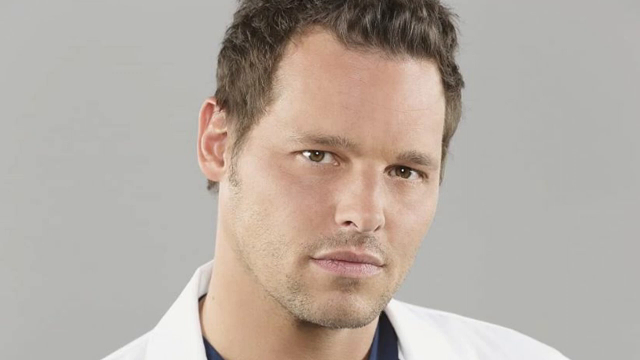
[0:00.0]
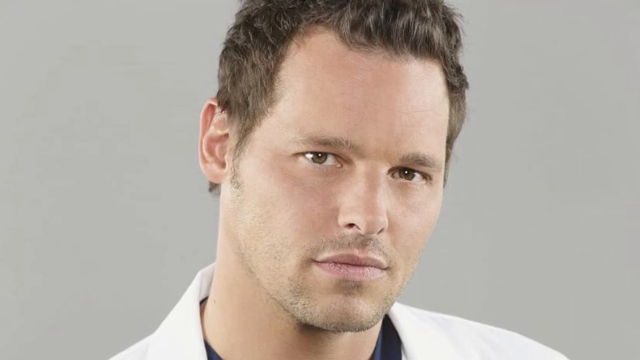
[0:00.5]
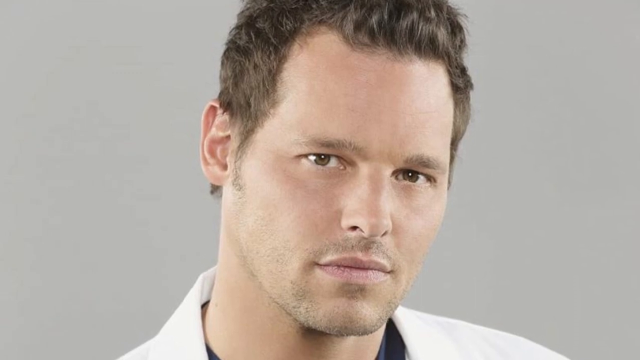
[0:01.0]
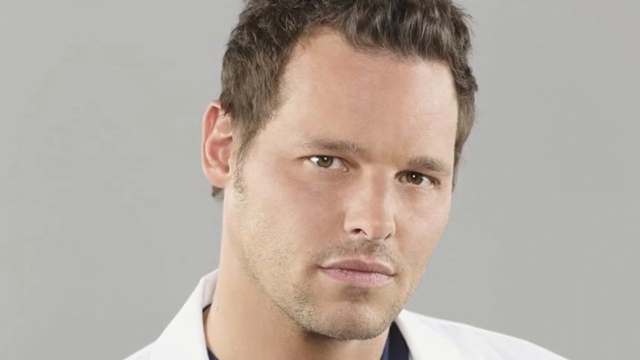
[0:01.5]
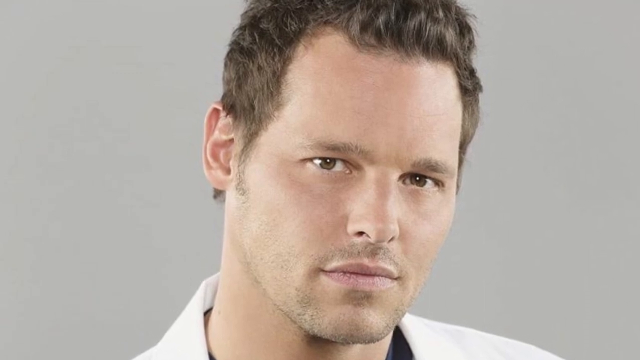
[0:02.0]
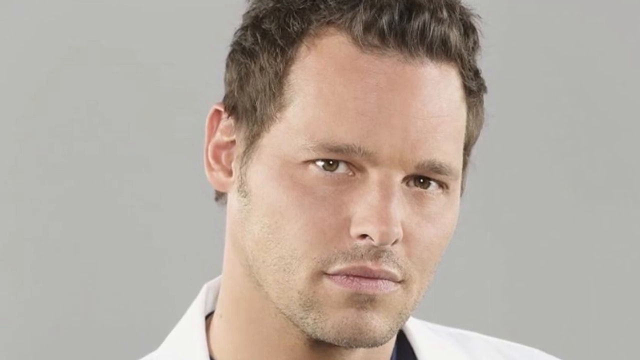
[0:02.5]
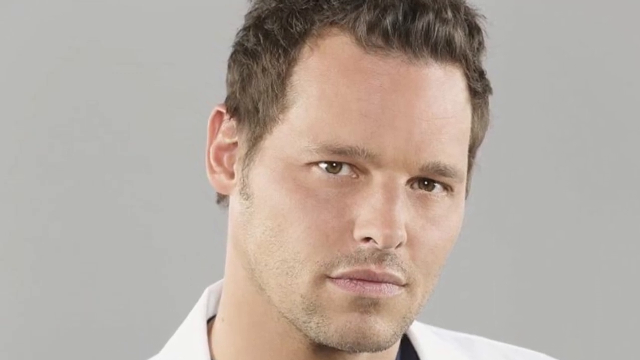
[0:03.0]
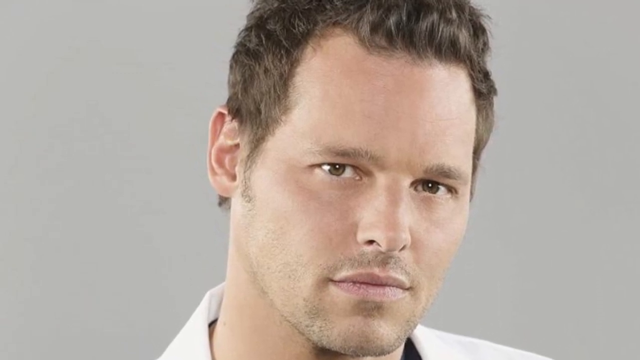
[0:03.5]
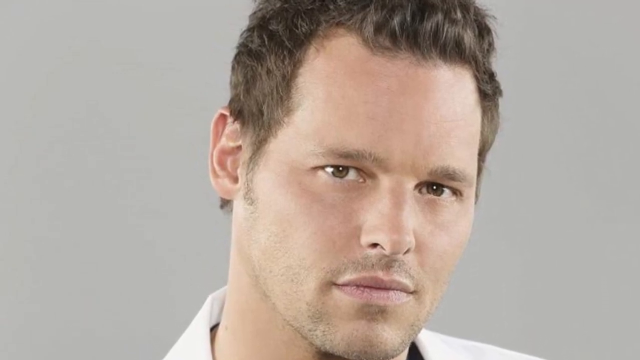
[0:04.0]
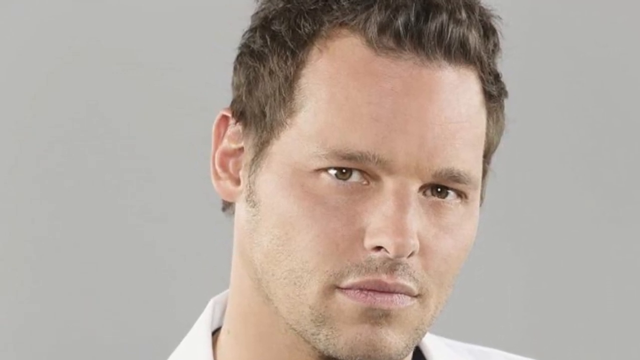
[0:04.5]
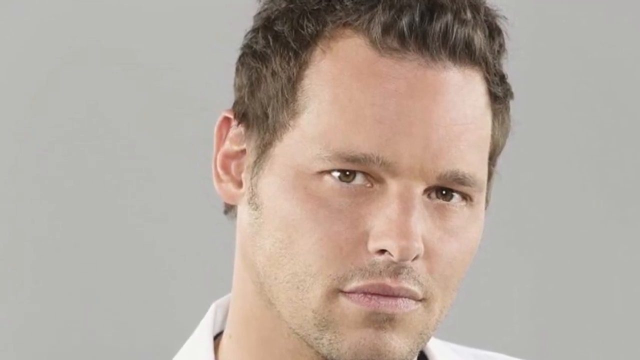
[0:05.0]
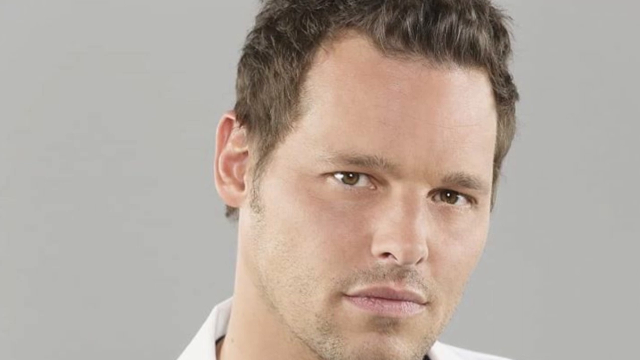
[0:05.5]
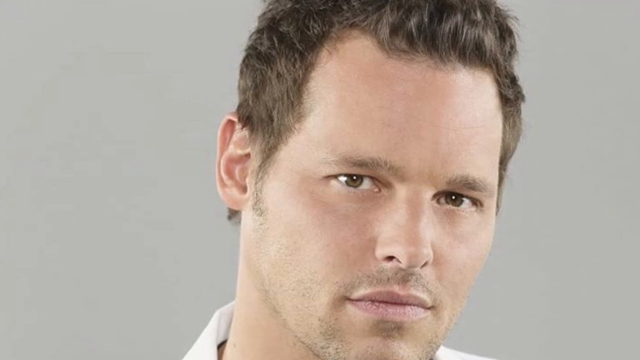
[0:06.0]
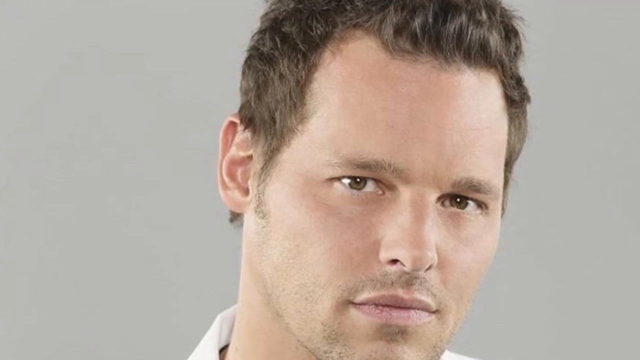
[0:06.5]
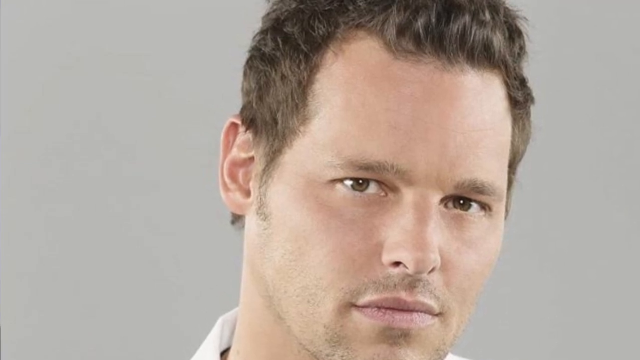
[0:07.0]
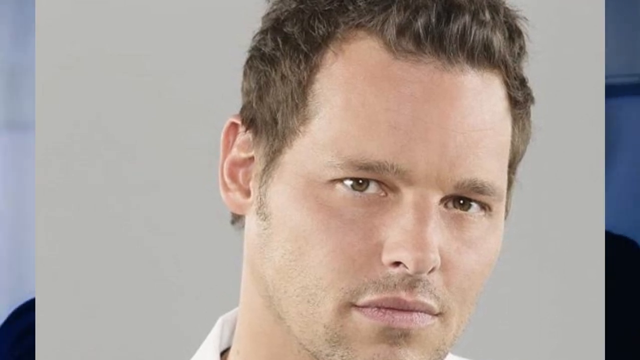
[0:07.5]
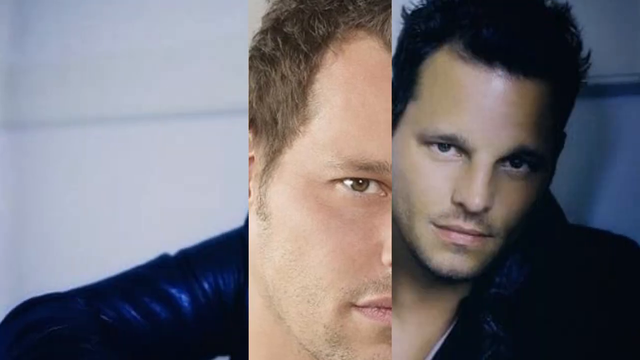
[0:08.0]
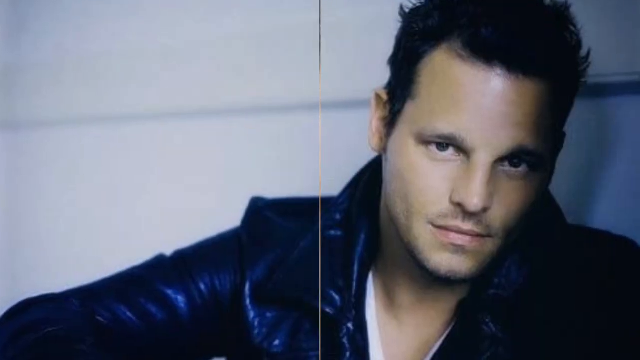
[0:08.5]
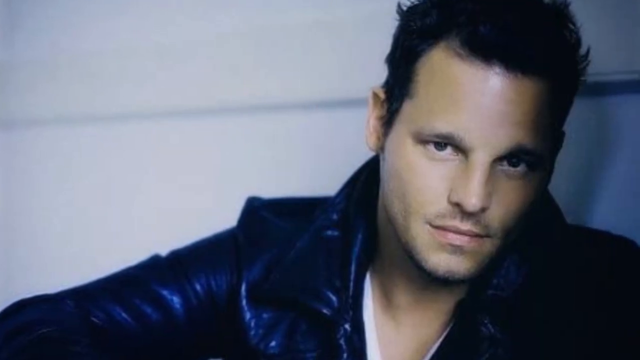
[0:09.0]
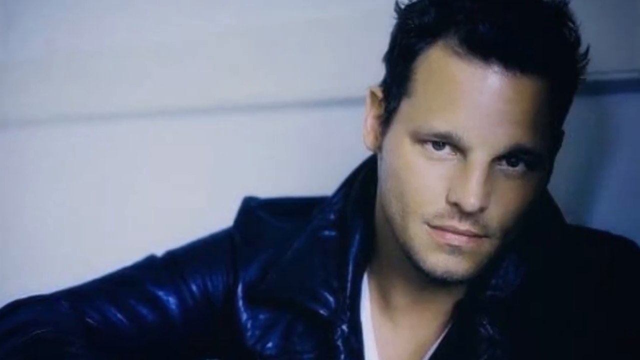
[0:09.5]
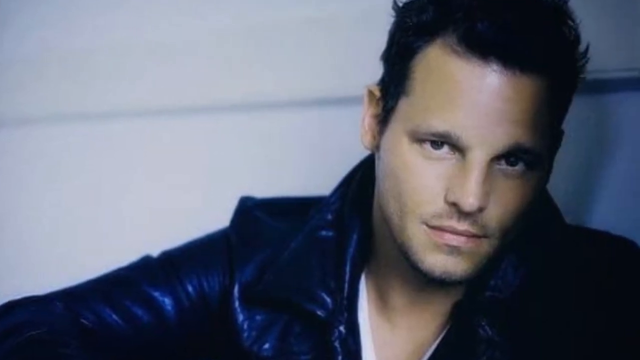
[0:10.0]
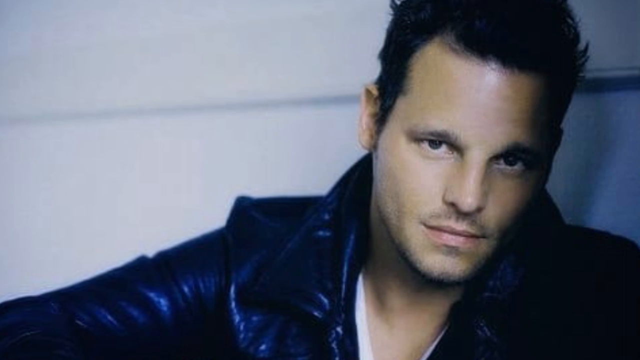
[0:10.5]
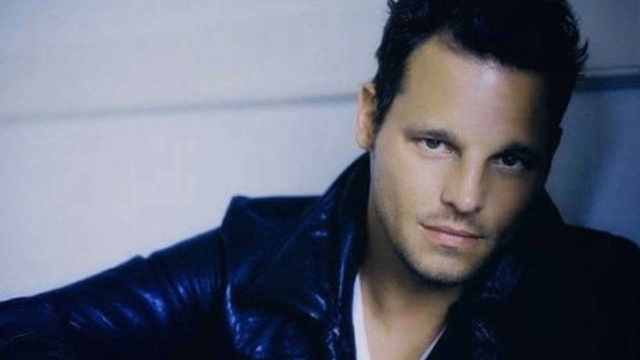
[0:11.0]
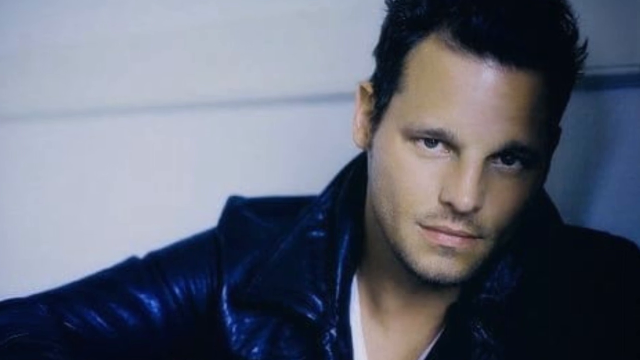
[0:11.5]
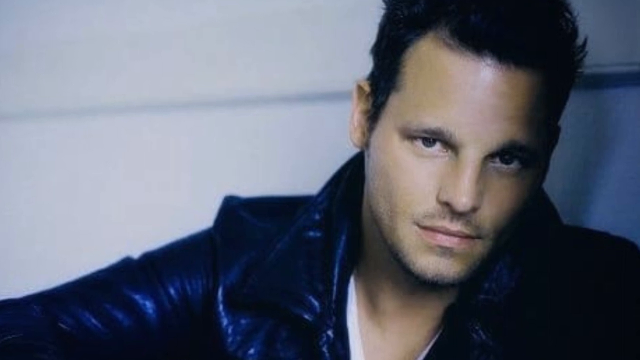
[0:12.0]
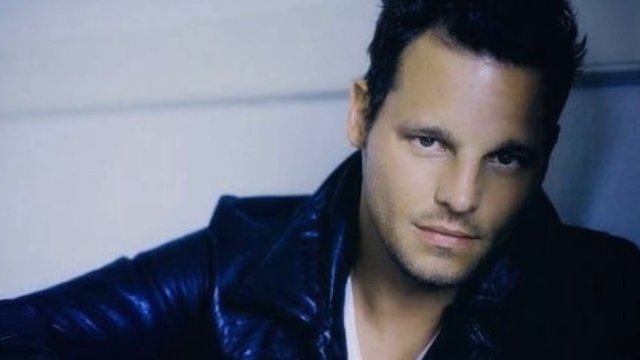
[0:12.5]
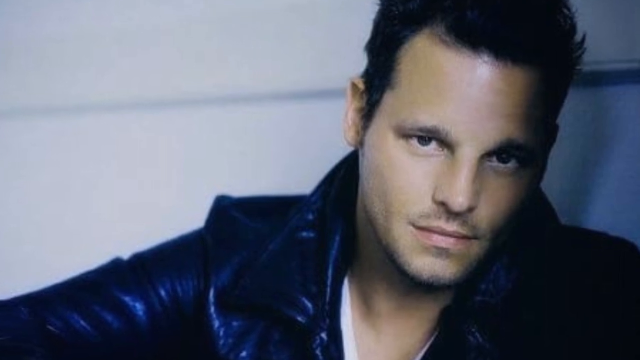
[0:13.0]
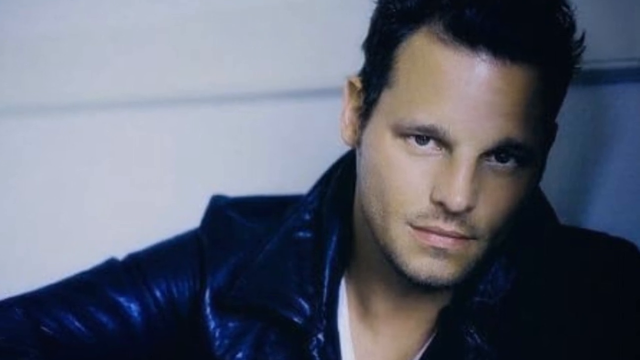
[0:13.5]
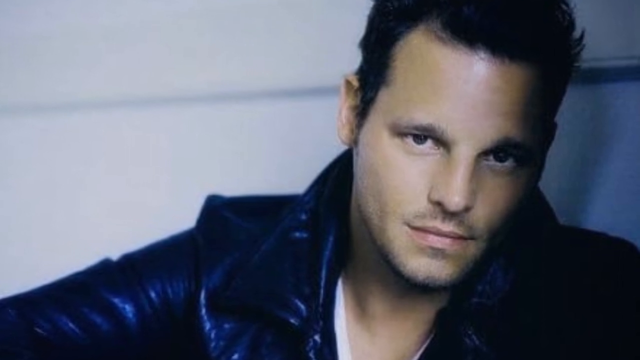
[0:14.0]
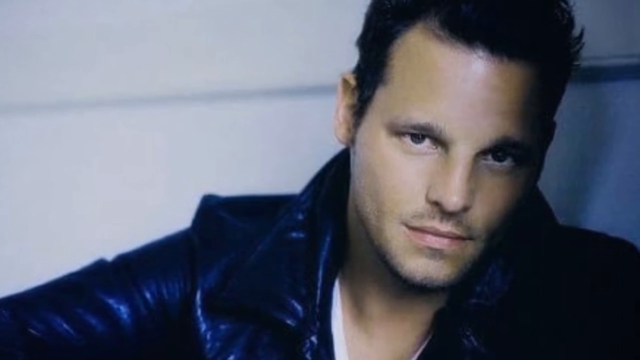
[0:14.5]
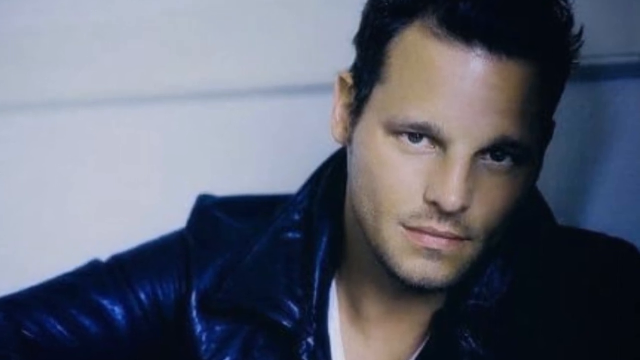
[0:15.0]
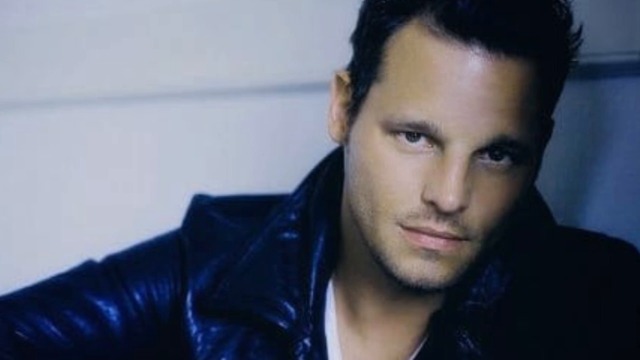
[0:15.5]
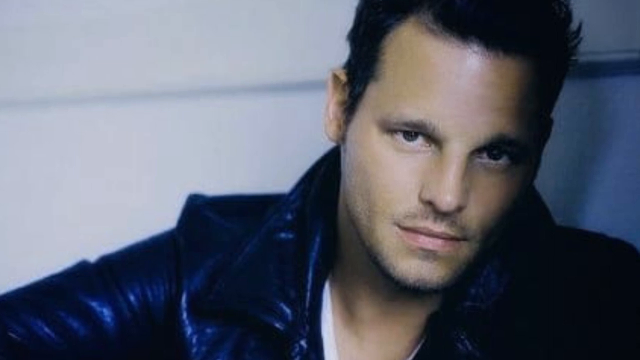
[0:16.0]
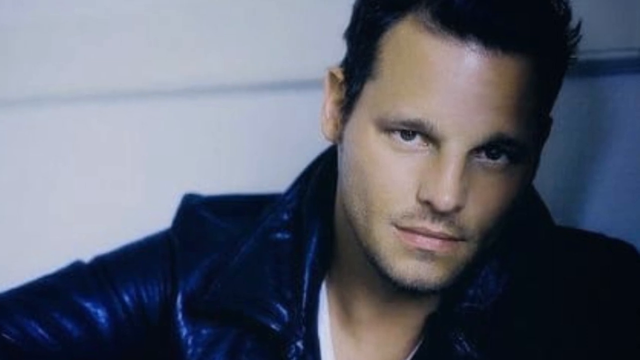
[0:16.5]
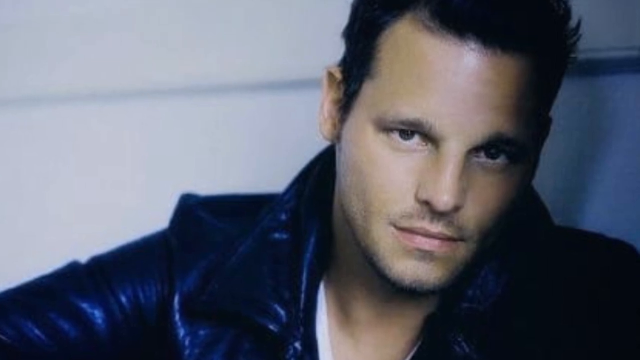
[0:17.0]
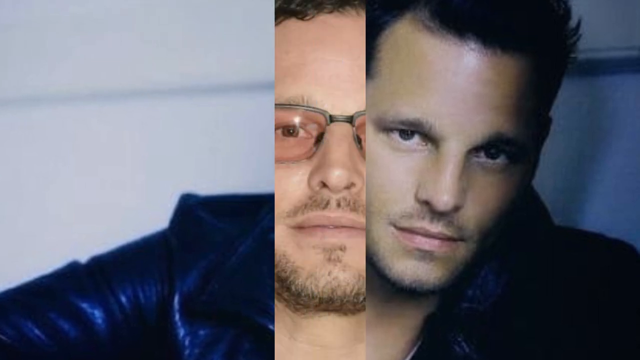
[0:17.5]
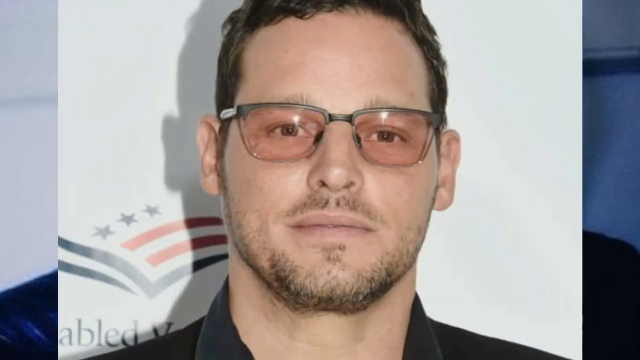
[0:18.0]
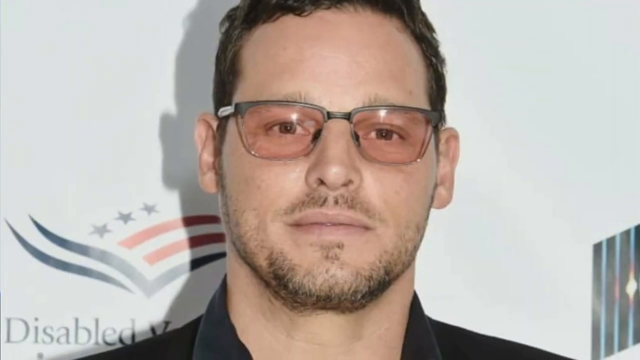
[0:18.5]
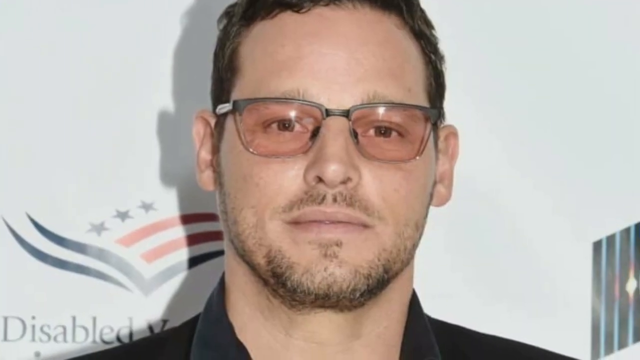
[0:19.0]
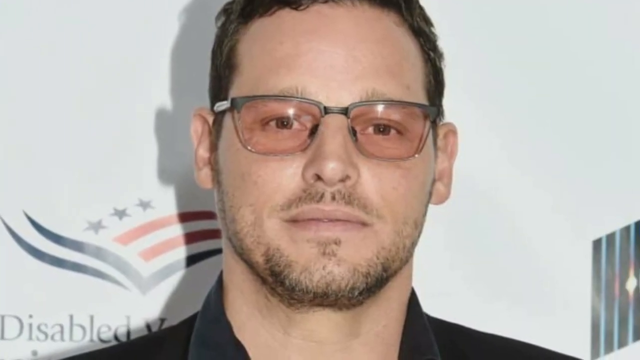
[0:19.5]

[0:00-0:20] A man with short brown hair, a little bit of scruff and brown eyes looks at the camera, wearing what looks to be a medical coat. It is a still image, and the camera pans in closer on his face. The video then switches to a picture of another man with short dark hair, brown eyes and a little bit of scruff, wearing a blue puffy jacket with a white t-shirt underneath. He is sitting down with his head leaning up against a wall and looking at the camera, and the view zooms in closer and closer to his face. It then cuts to the same man wearing rose-tinted glasses, with brown eyes, short brown hair and a little bit more scruff, very short, and a collared black shirt. The background is a white wall with a symbol of what looks like an artistic bird with two red stripes and three stars above it. In the bottom right-hand corner there is a black polygon object on the background with some colorful stripes through it.